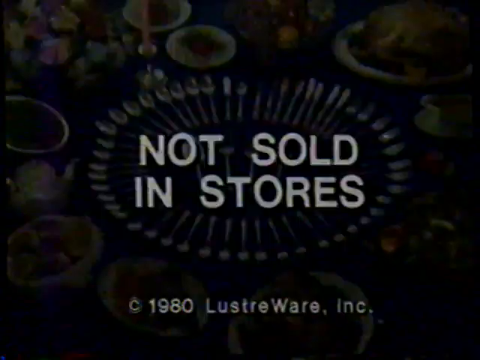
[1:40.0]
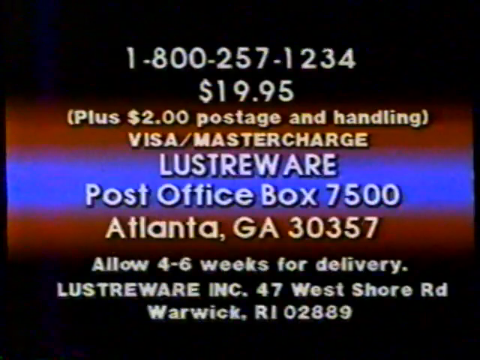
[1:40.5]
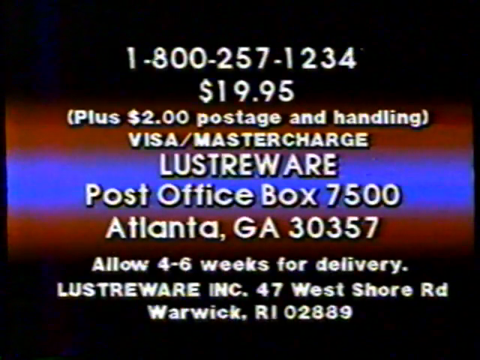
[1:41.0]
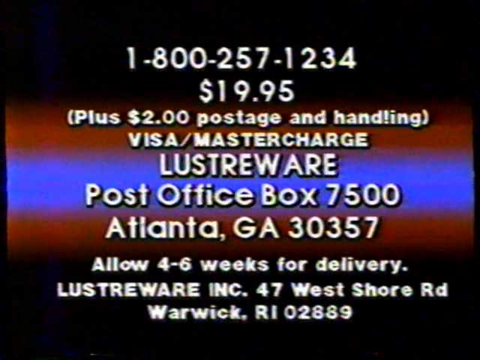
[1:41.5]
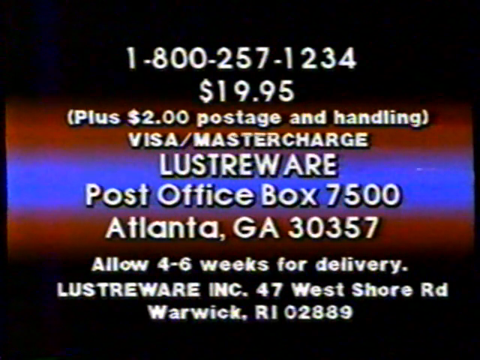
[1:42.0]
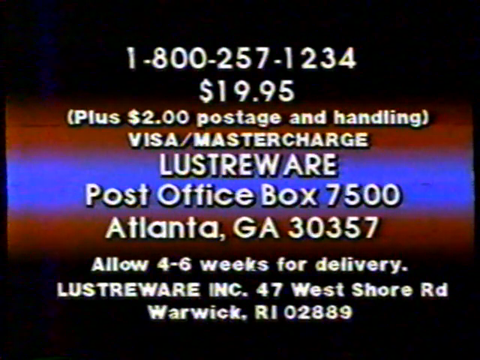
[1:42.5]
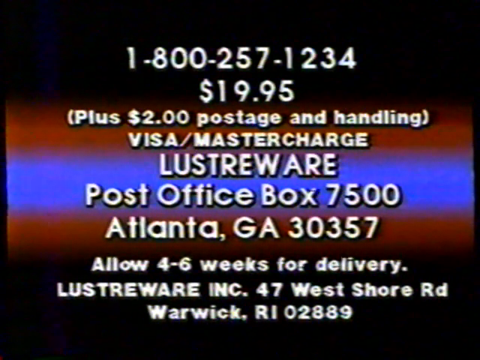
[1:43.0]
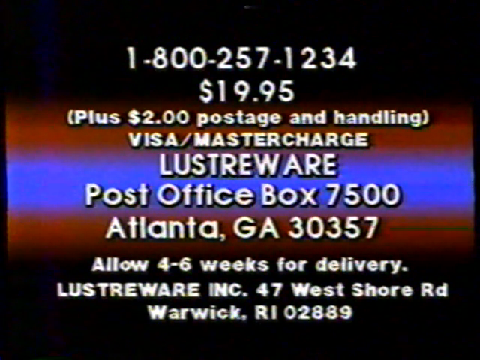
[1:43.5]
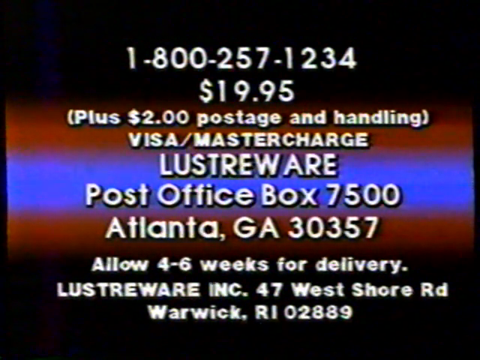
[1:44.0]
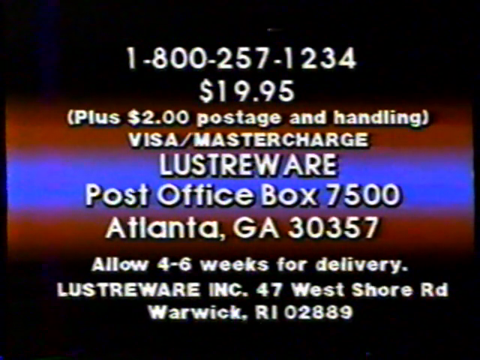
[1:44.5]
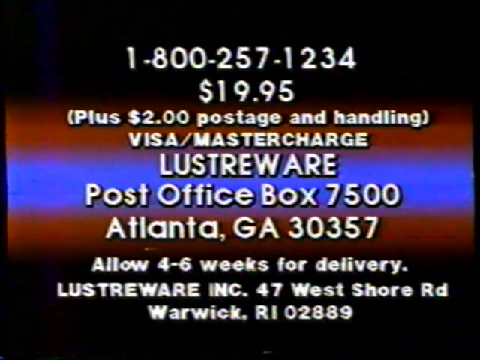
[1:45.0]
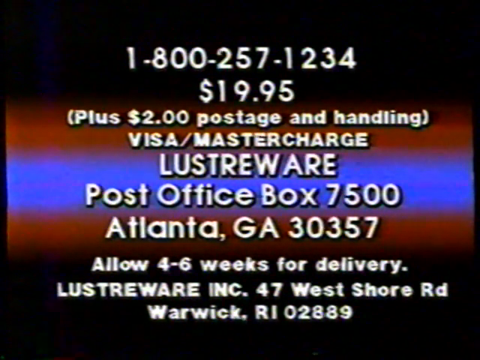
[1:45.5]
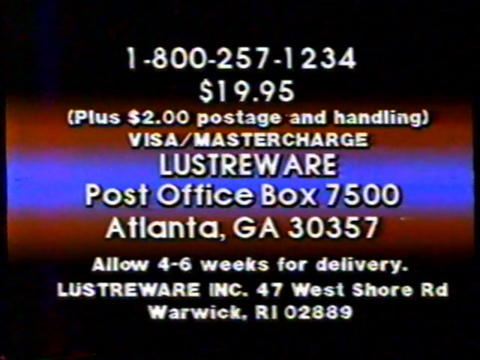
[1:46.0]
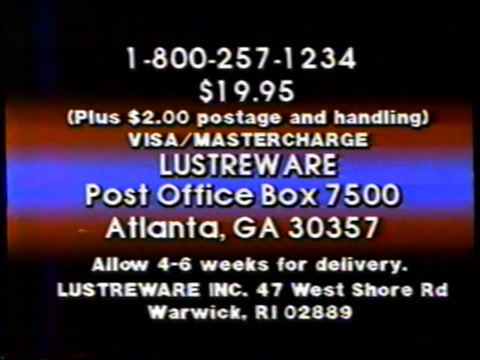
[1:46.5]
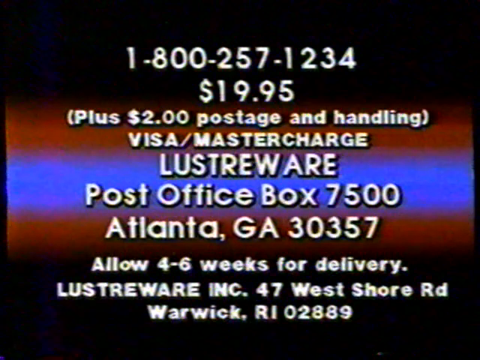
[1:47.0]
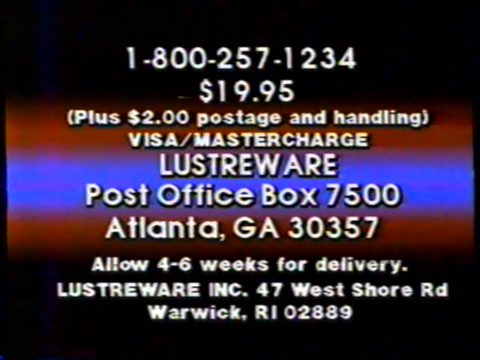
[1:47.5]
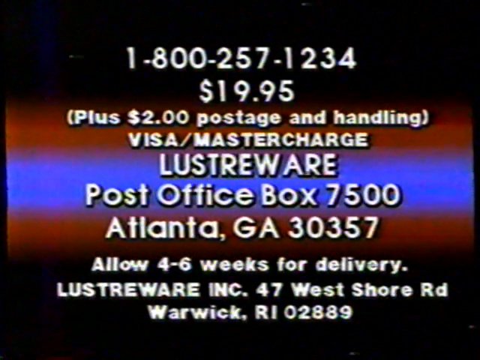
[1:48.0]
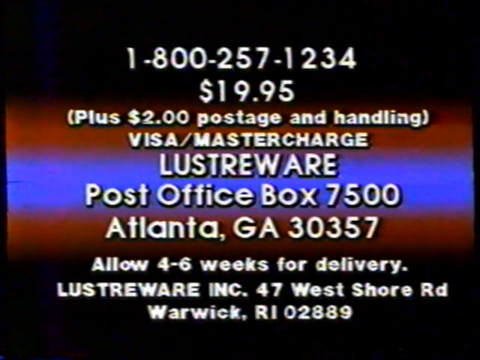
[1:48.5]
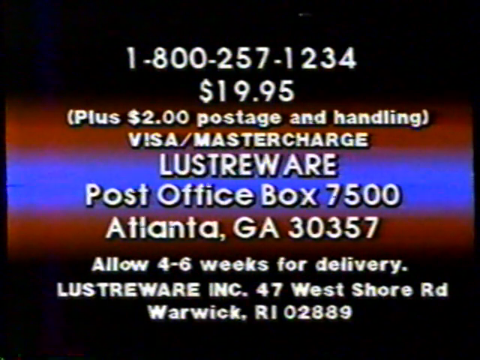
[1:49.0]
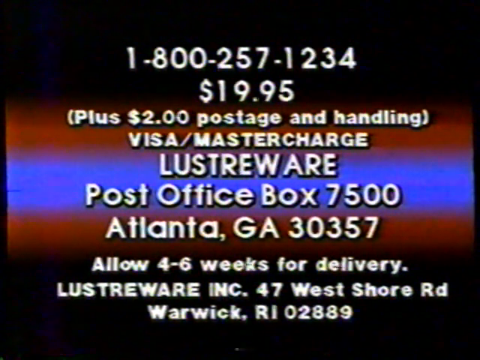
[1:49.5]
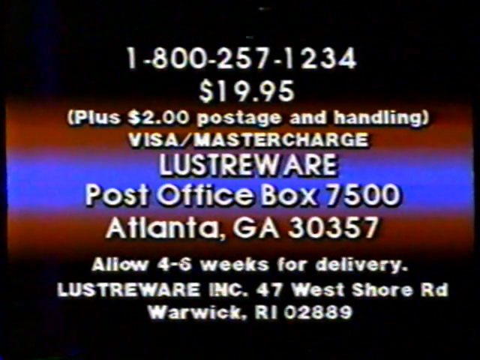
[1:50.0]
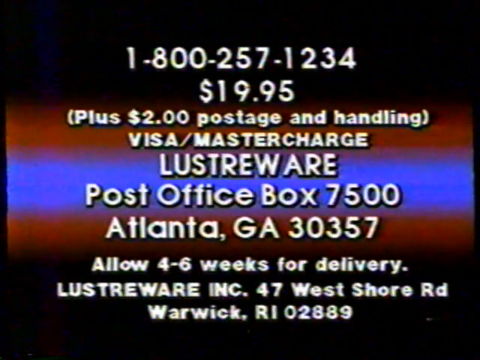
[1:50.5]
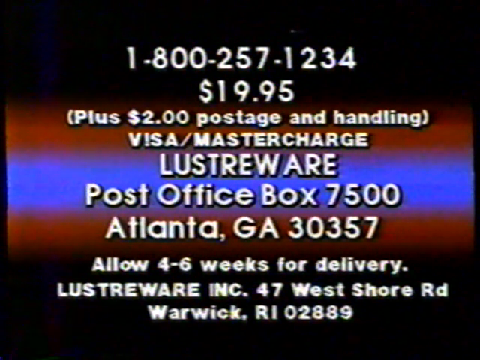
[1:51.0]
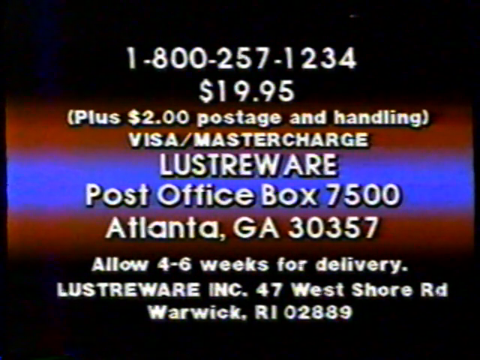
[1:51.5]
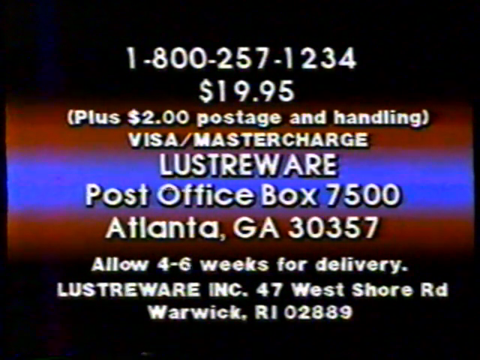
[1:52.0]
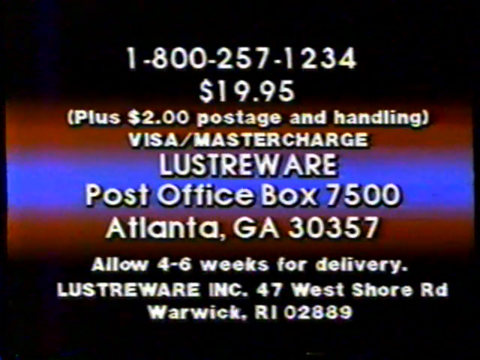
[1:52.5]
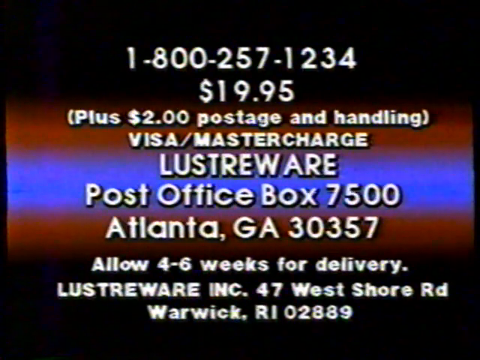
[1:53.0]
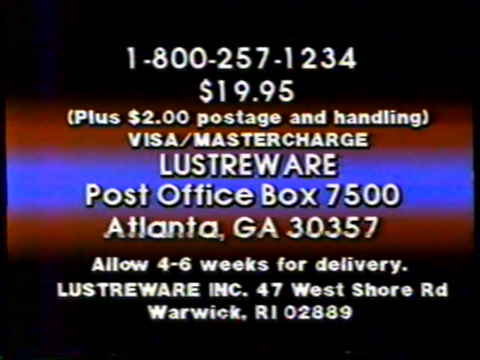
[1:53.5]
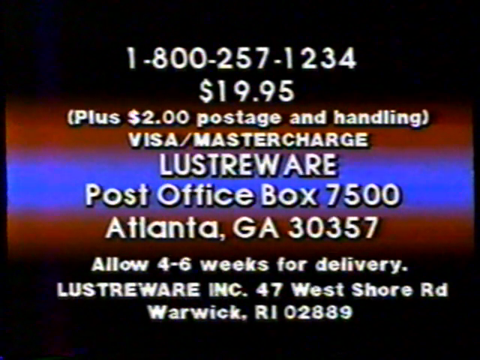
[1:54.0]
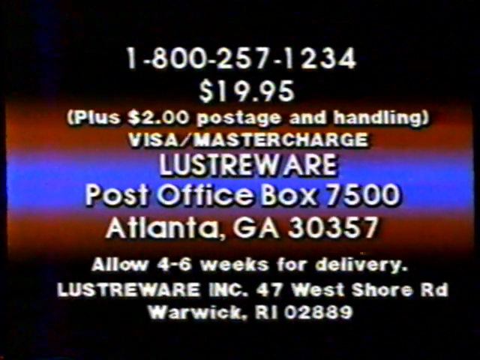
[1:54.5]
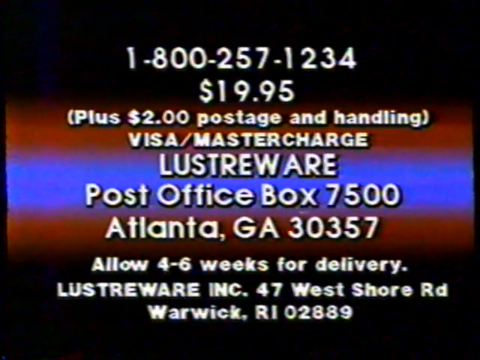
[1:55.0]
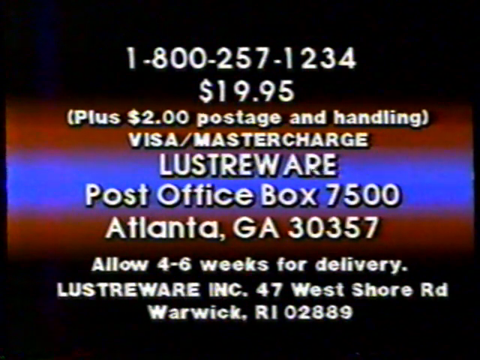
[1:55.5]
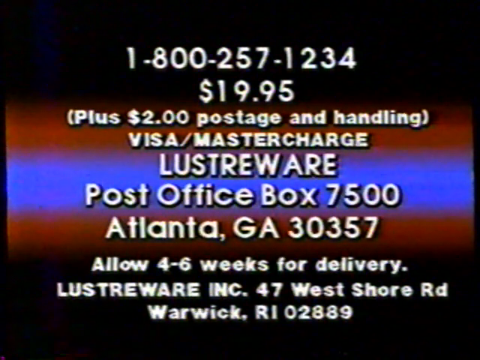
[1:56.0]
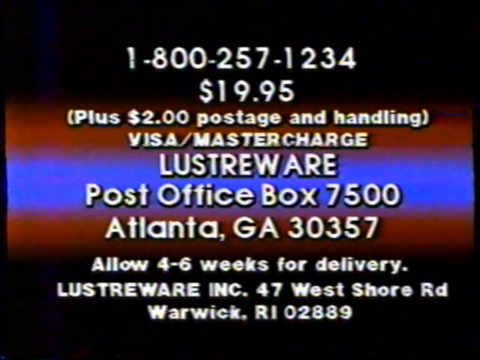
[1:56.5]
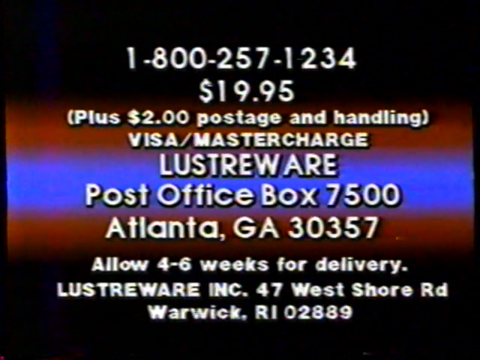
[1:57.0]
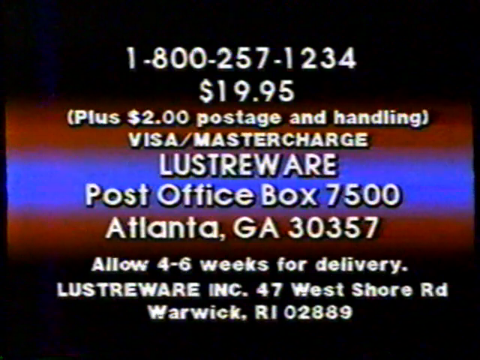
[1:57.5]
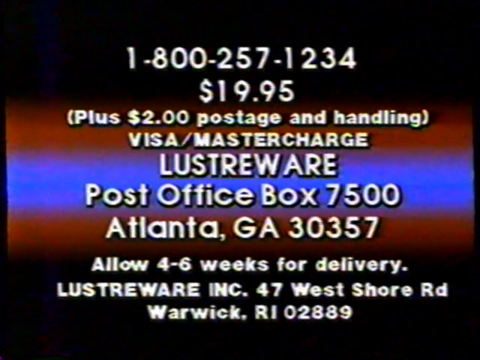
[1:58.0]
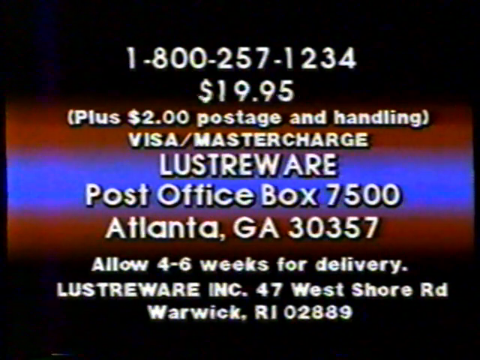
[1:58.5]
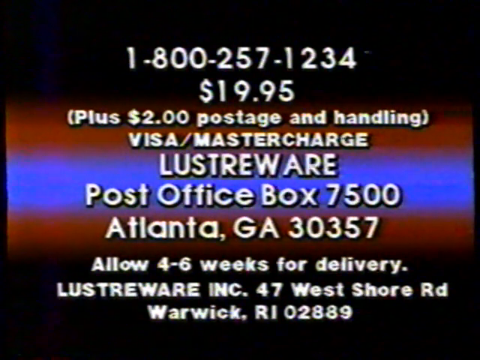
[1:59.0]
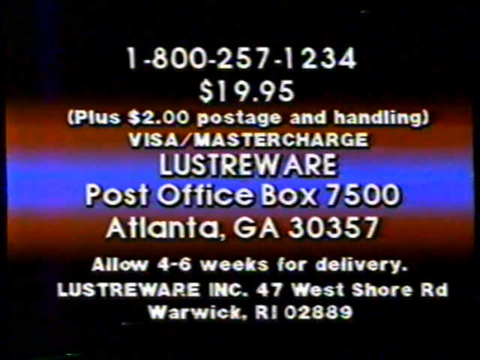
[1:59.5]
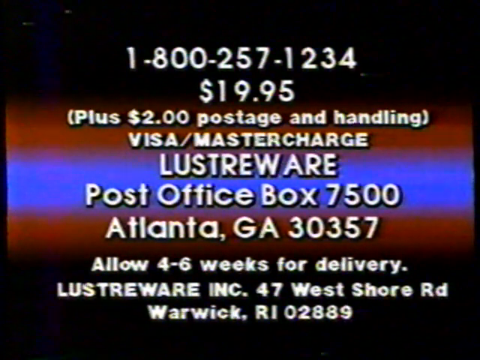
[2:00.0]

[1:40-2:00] The screen shows a gradient background running from top to bottom: the top third is black, grading into red, with a blue stripe in the middle and another red stripe beneath it that grades back into black. In front of it, white text gives a phone number, 1-800-257-1234, a price of $19.95 plus $2 postage and handling, Visa and Mastercharge, Lustreware, Post Office Box 7500 Atlanta, GA 30357, a request to allow 46 weeks for delivery, and Lustreware, Inc., 47 West Shore Road, Warwick, RI 02889. The screen stays up for some time while film grain makes it flicker and shimmer, though the text remains fairly legible. Nothing else happens. It appears to be styled like a daytime television shopping channel offer.